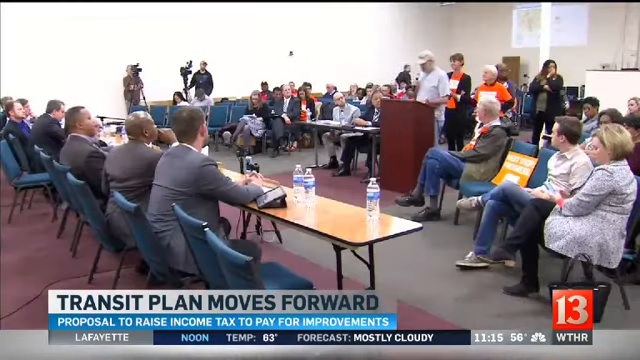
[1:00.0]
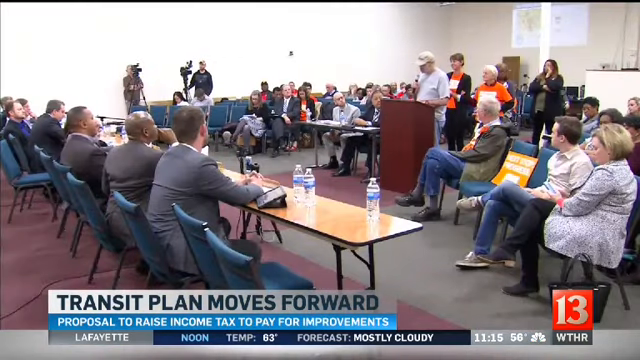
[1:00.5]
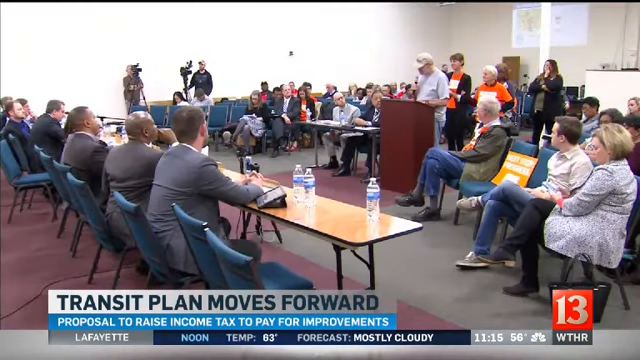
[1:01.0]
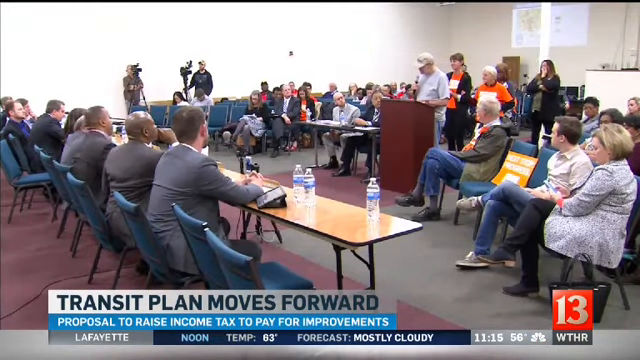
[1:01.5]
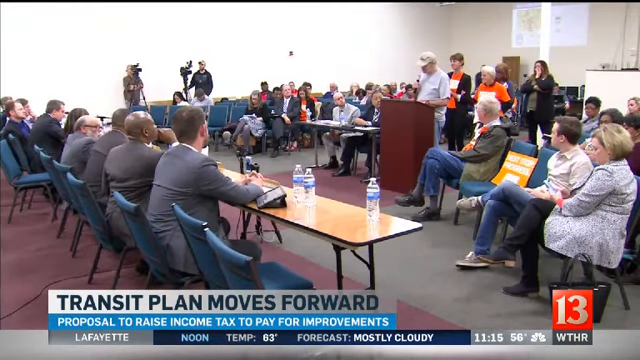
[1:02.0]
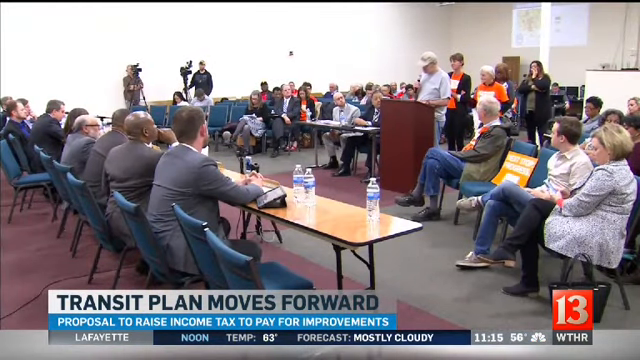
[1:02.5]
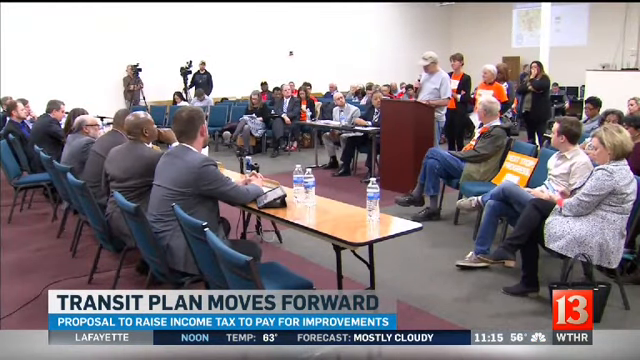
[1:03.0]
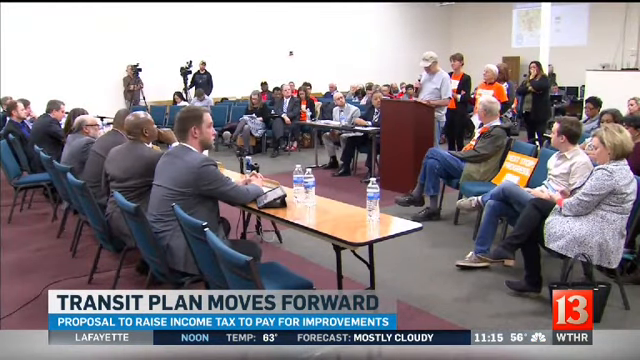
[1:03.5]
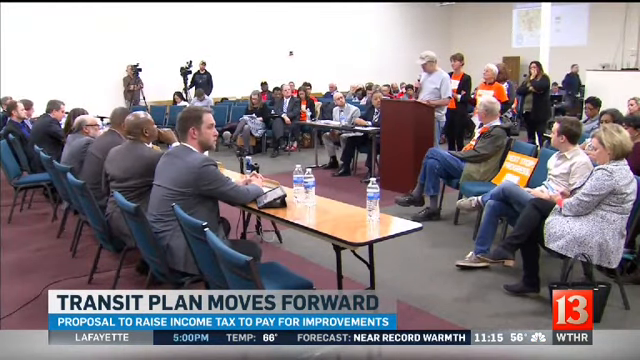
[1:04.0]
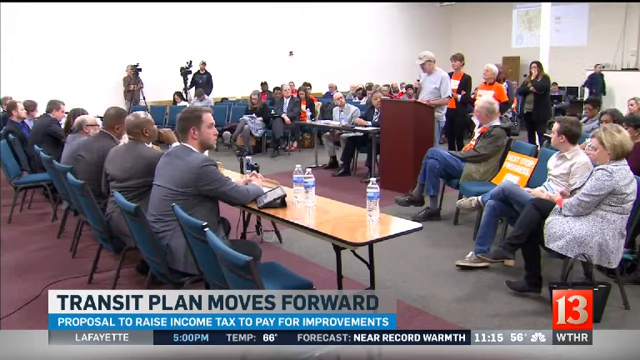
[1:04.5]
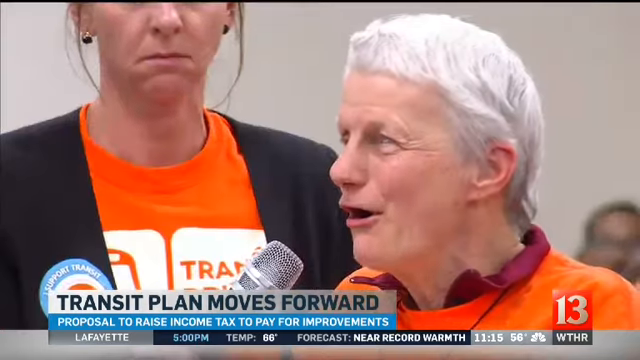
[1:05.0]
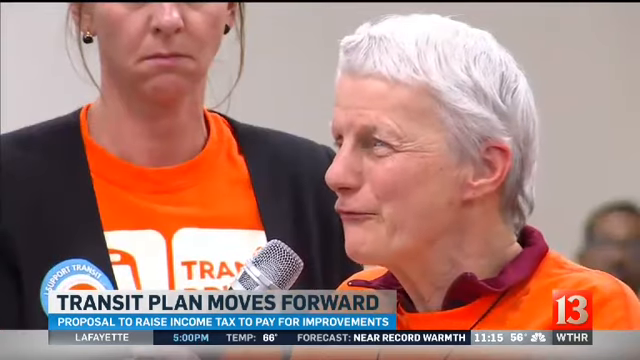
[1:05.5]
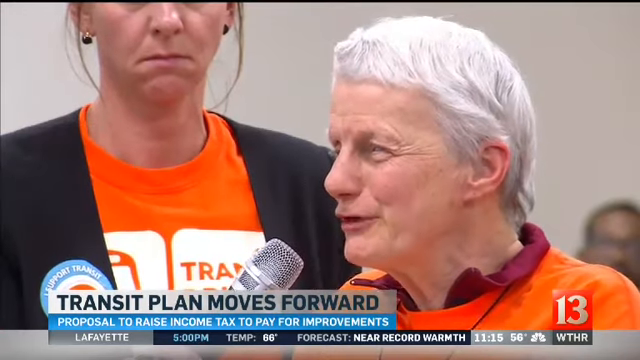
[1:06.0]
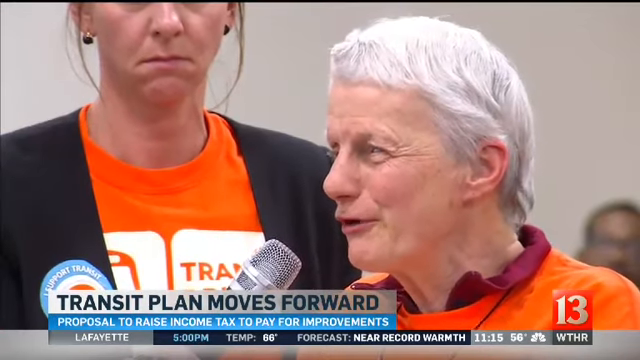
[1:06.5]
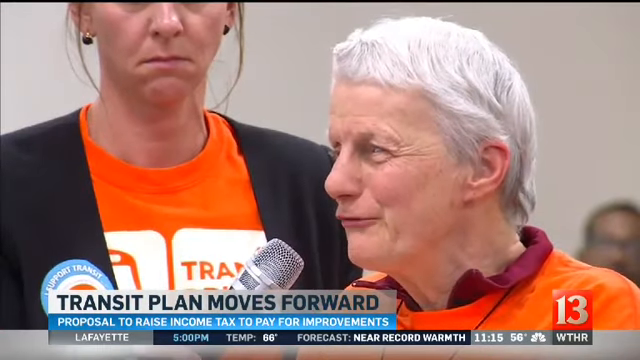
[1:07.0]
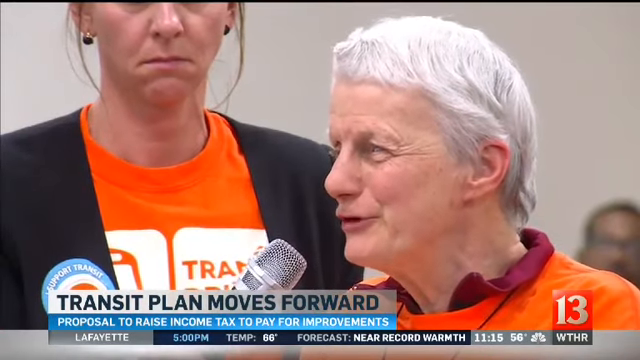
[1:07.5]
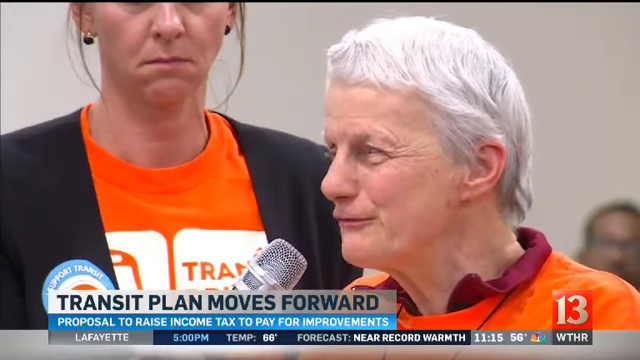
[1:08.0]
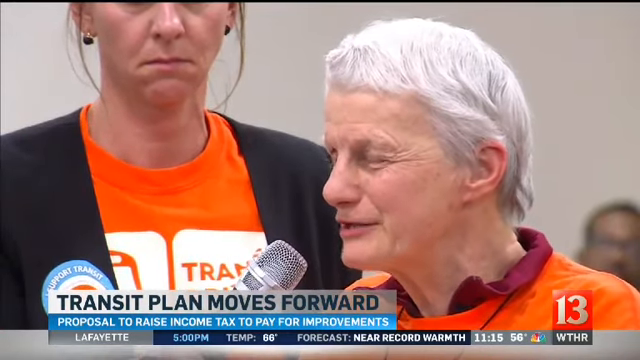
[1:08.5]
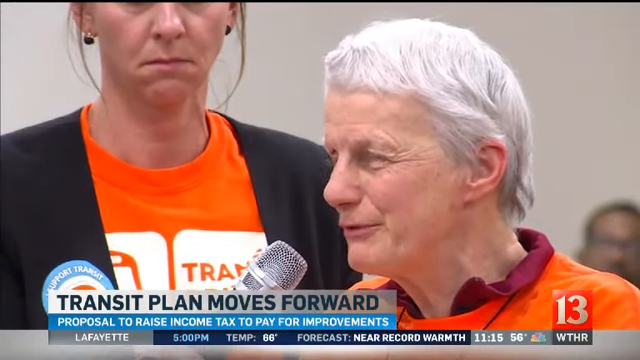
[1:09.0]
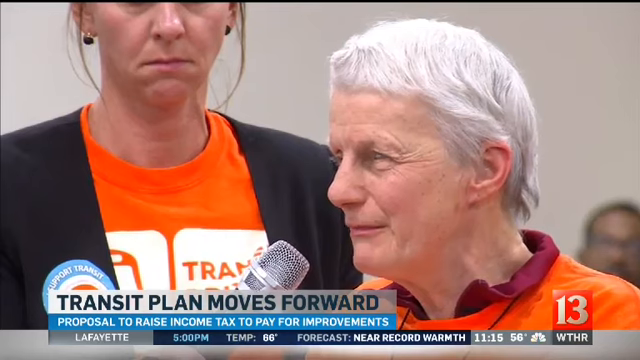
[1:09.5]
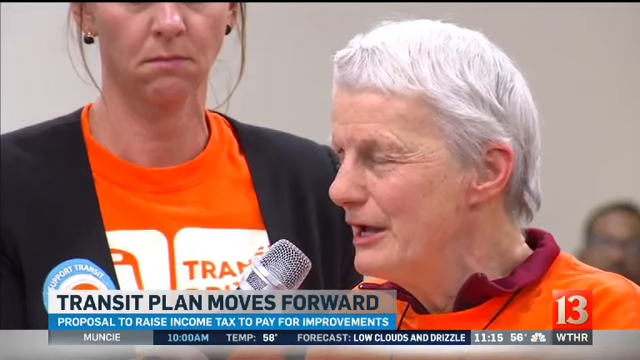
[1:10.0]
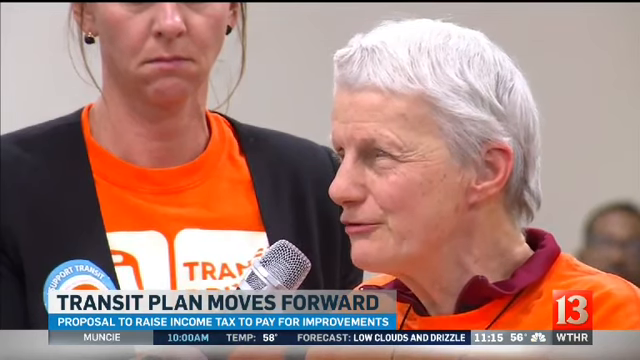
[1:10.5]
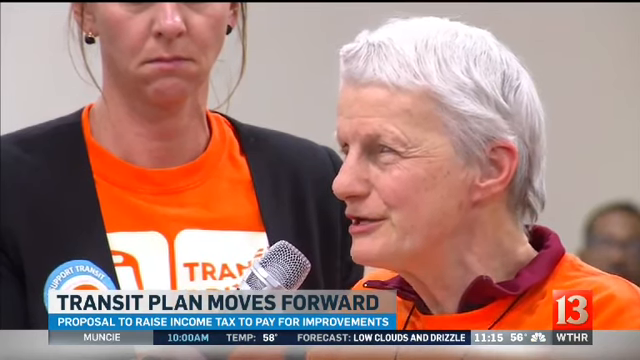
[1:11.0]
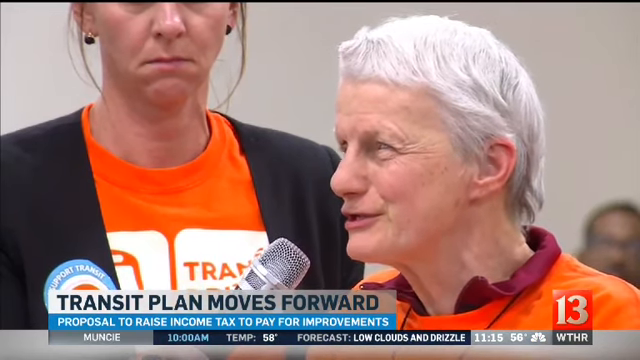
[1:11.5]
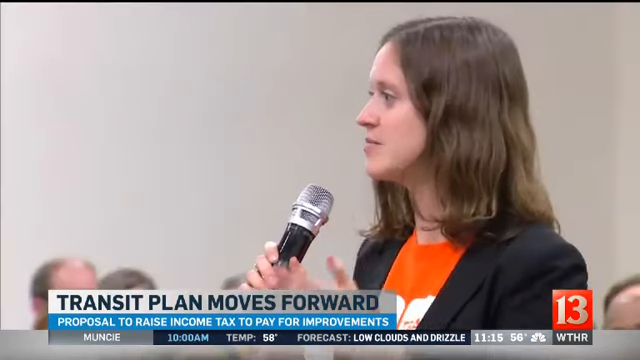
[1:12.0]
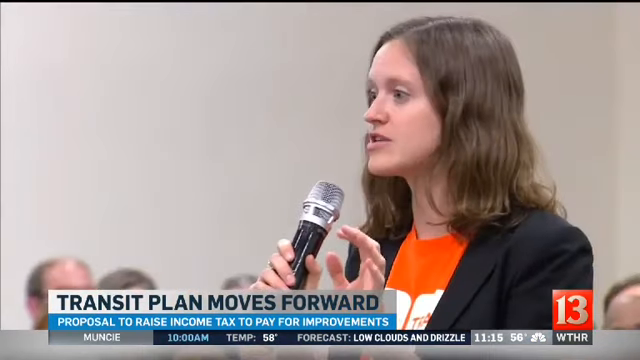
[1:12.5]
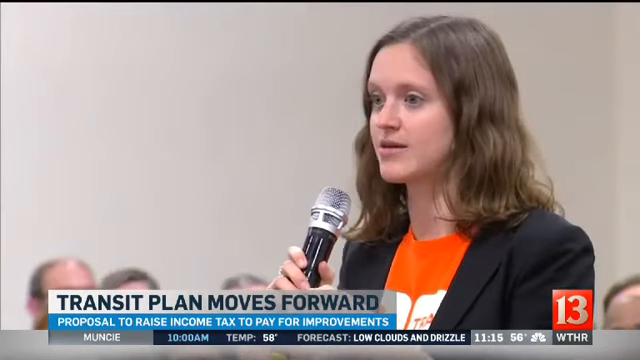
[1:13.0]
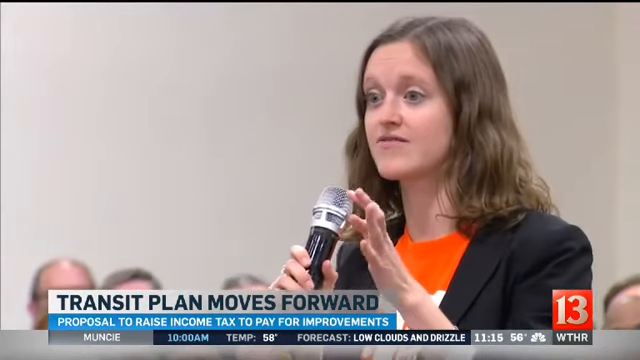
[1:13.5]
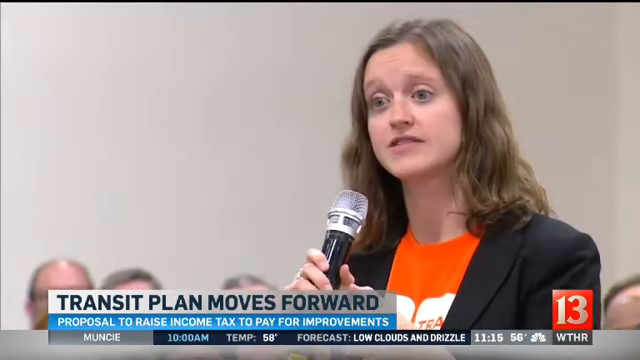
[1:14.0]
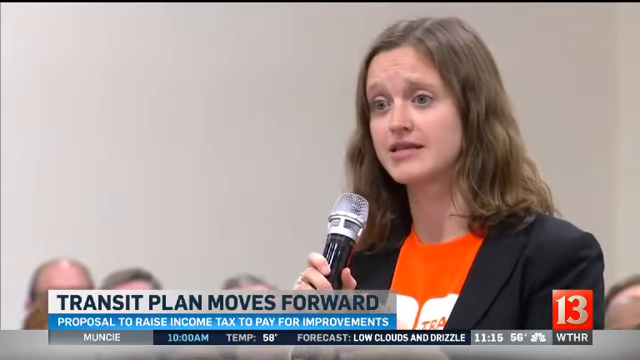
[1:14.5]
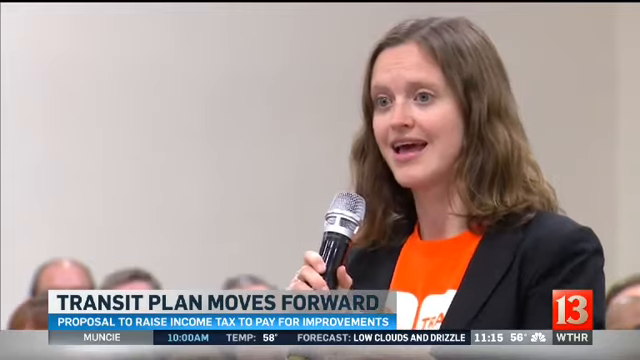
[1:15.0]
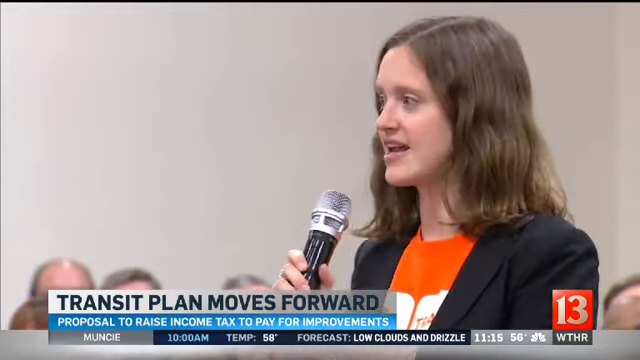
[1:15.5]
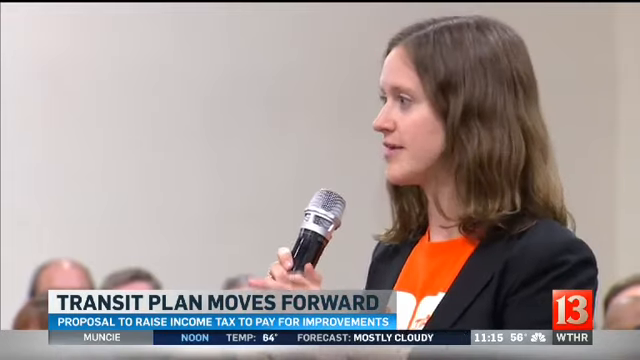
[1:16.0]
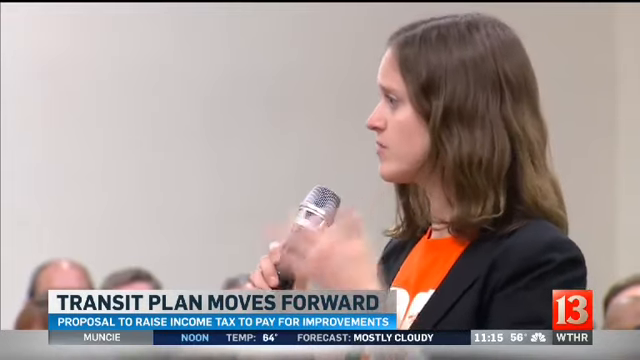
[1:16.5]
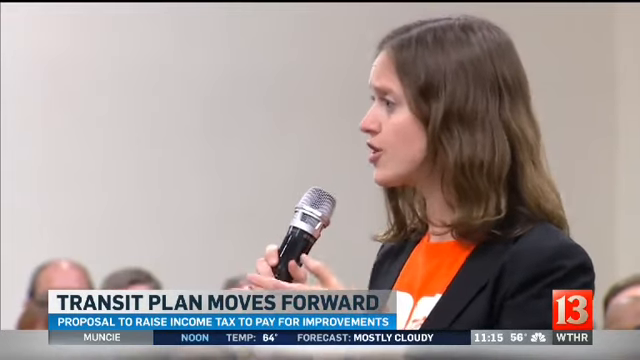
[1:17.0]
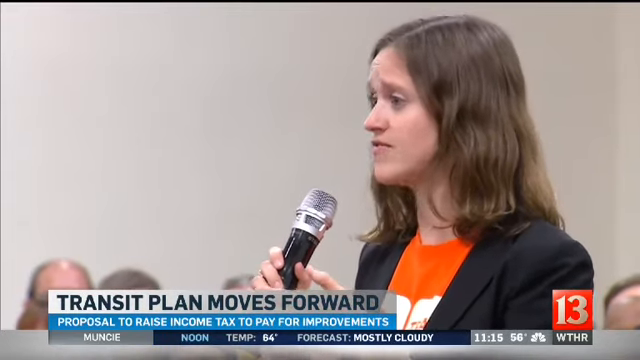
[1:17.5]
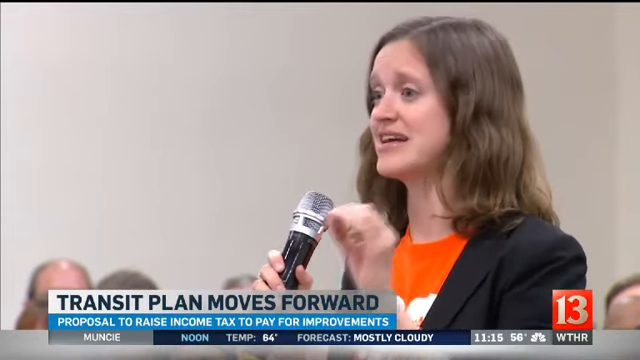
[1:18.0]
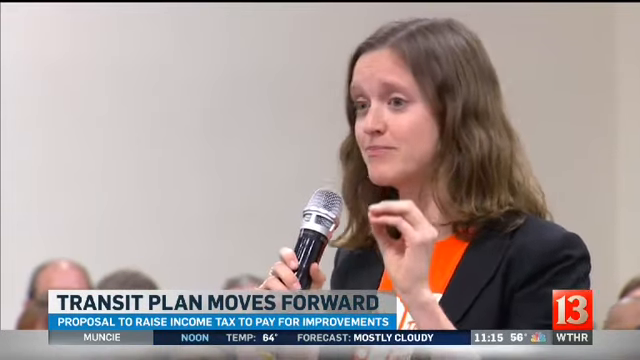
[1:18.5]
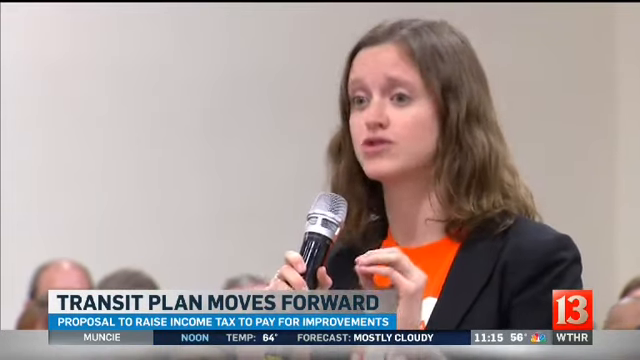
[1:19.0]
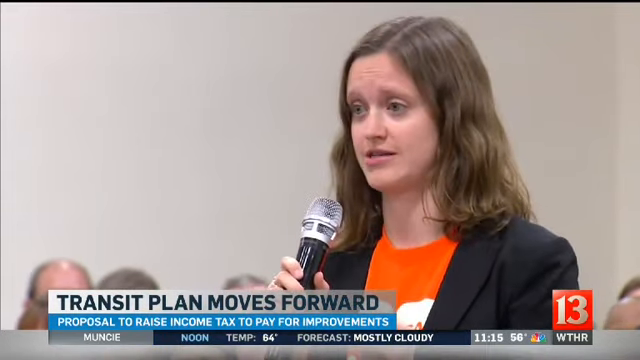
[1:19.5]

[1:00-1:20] The meeting looks like a city council or county council meeting, with blue chairs. A bunch of people are looking at a podium, where a man in a white shirt and a white ball cap is standing at the wooden podium, with people in line behind him. A bunch of people in suits, particularly men, are sitting at a long table with water bottles on it. A white bar at the bottom says "transit plan moves forward" and "proposal to raise income tax to pay for improvements". A woman with gray hair and an orange shirt has stood up to speak. A young woman with long mousy brown hair and a black suit top is also speaking into a microphone; she brings her hand up, sort of pinches her forefinger and thumb together, and gestures with it while speaking.